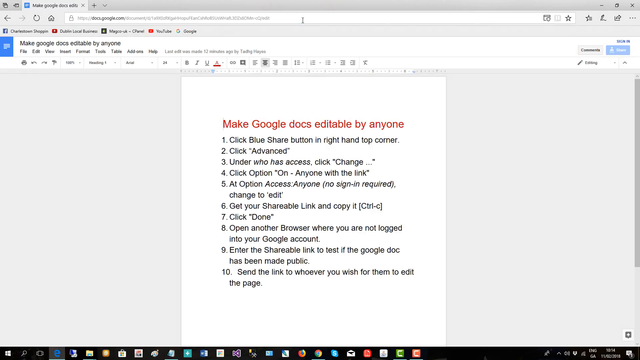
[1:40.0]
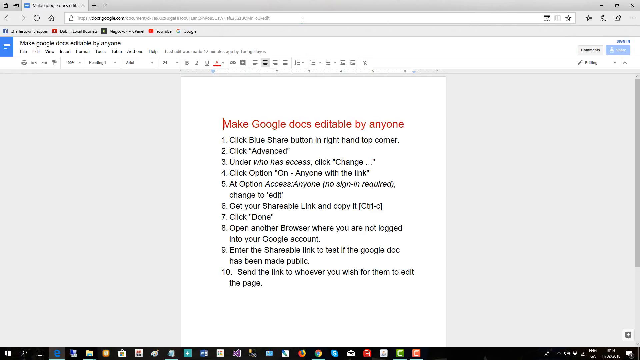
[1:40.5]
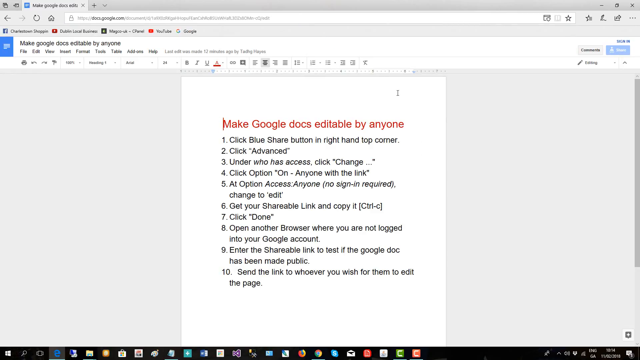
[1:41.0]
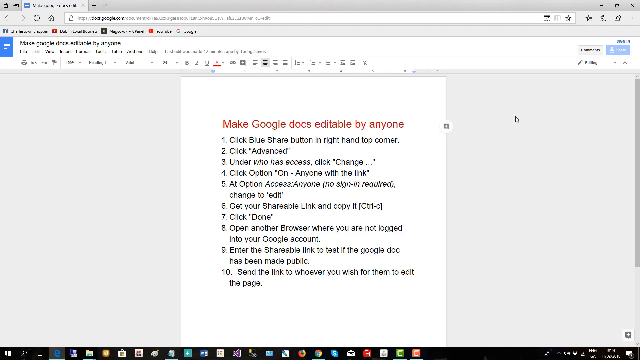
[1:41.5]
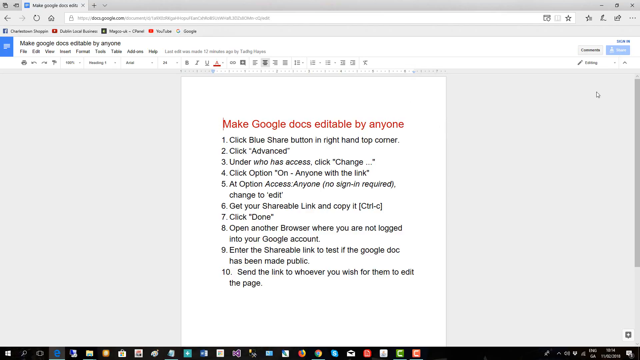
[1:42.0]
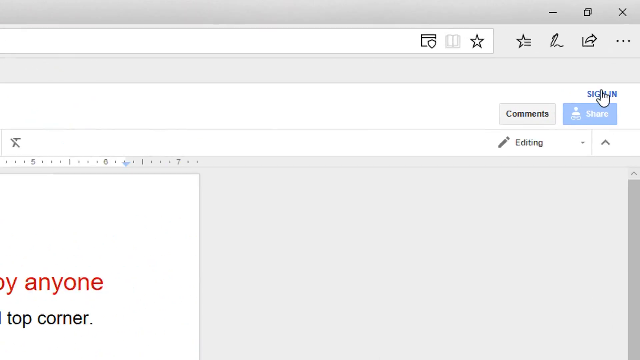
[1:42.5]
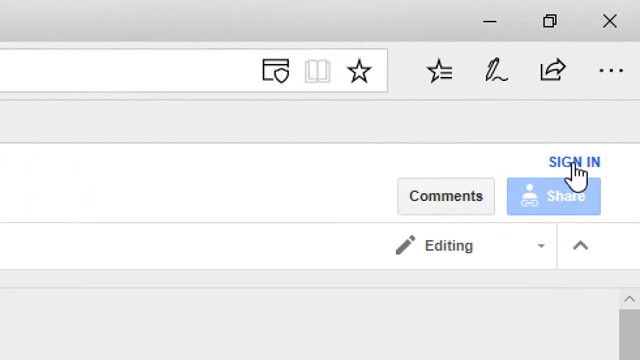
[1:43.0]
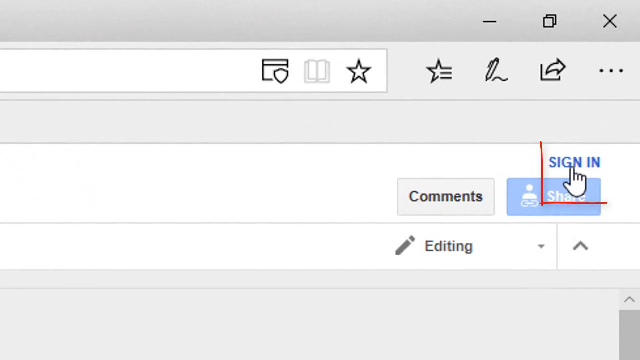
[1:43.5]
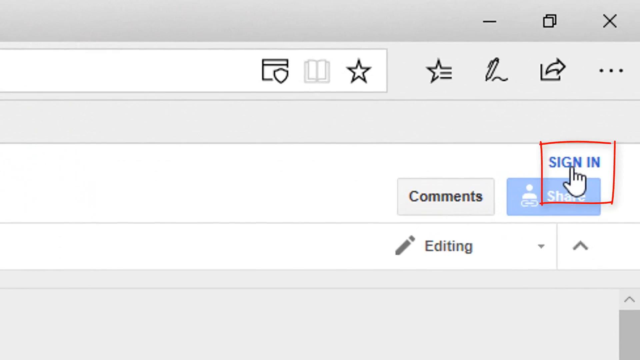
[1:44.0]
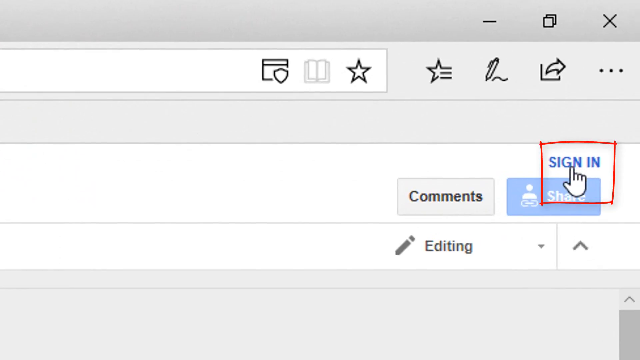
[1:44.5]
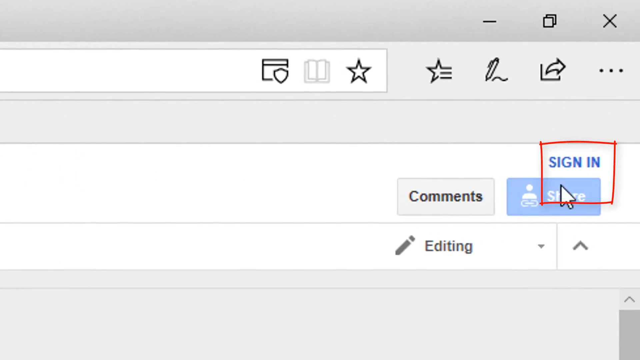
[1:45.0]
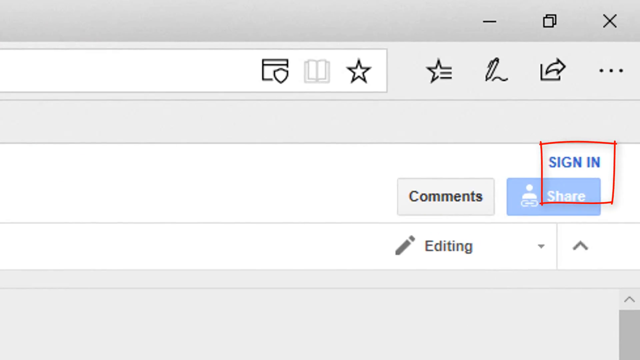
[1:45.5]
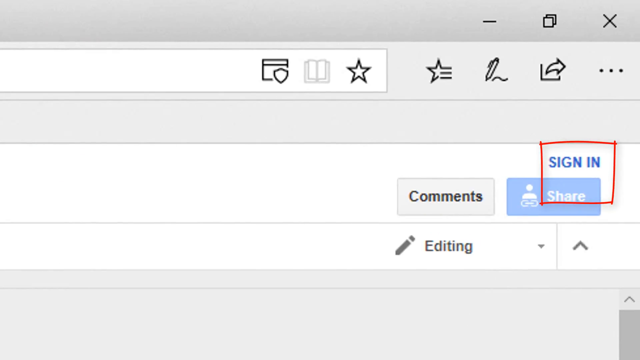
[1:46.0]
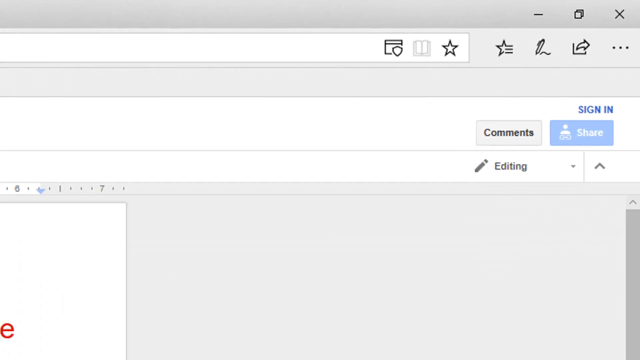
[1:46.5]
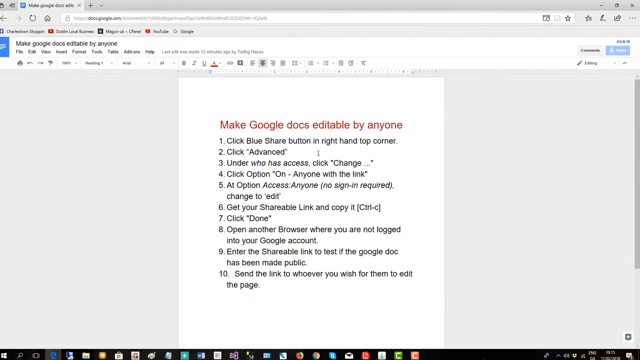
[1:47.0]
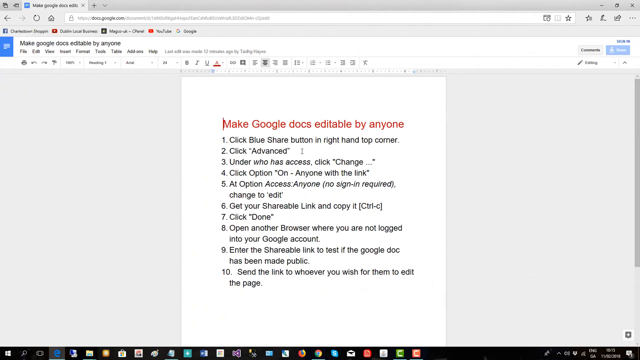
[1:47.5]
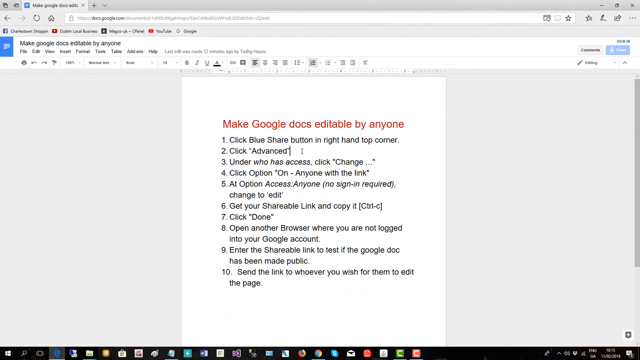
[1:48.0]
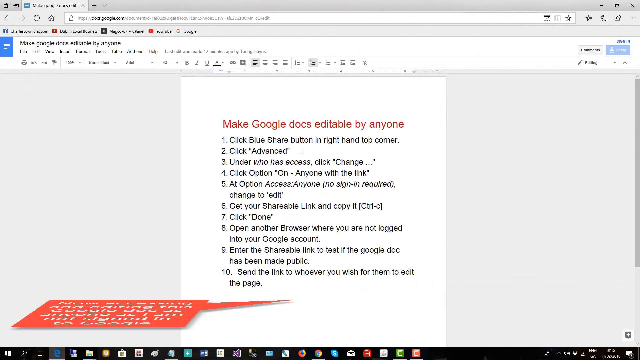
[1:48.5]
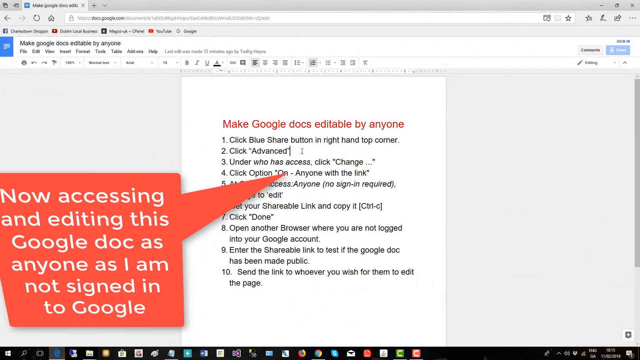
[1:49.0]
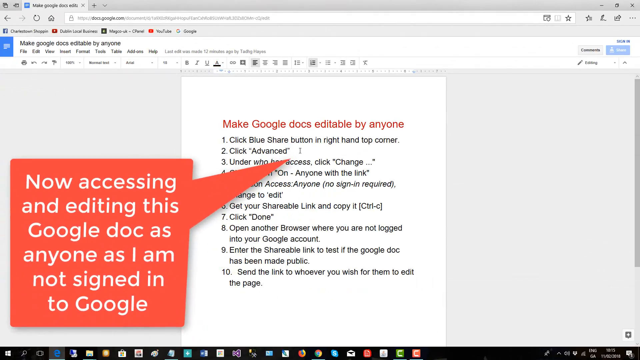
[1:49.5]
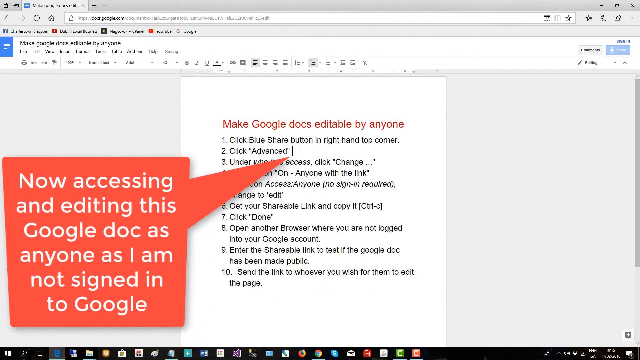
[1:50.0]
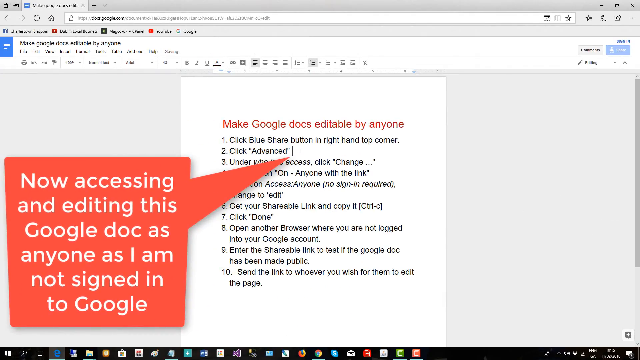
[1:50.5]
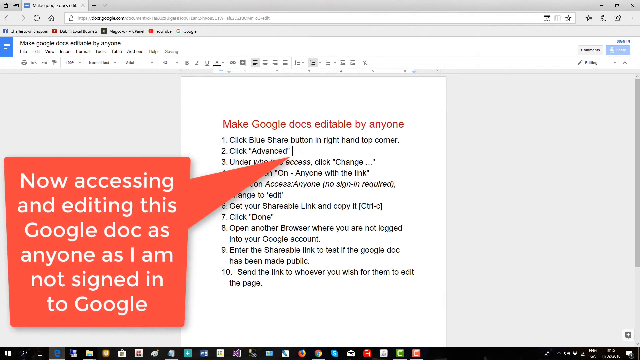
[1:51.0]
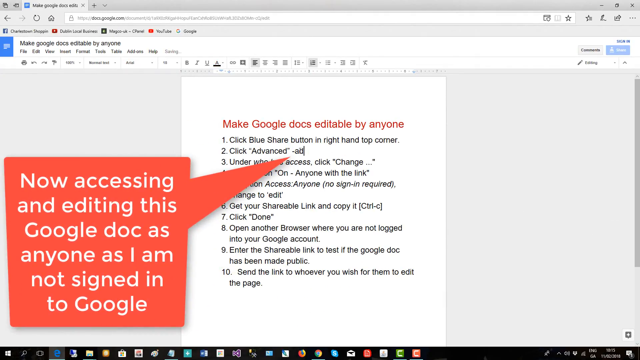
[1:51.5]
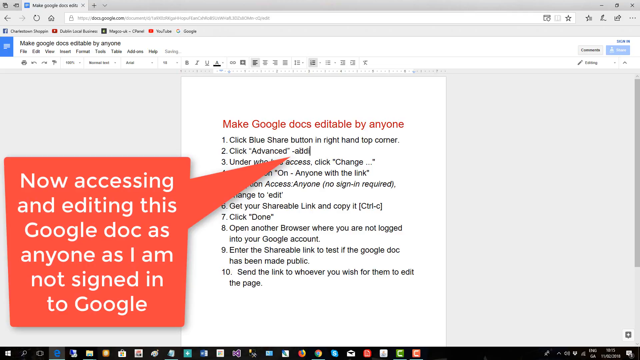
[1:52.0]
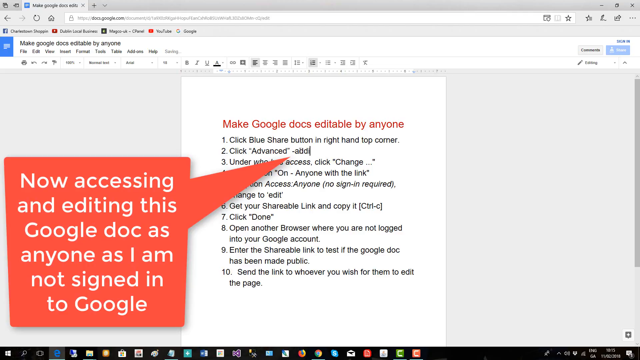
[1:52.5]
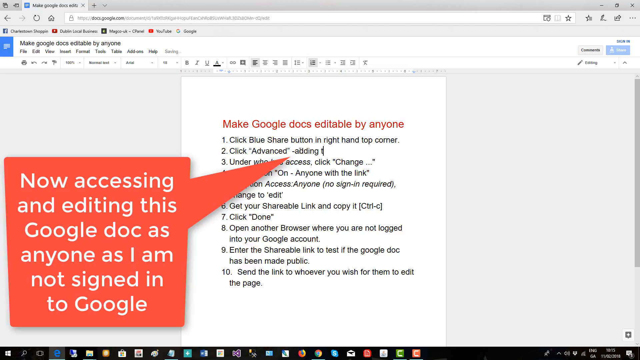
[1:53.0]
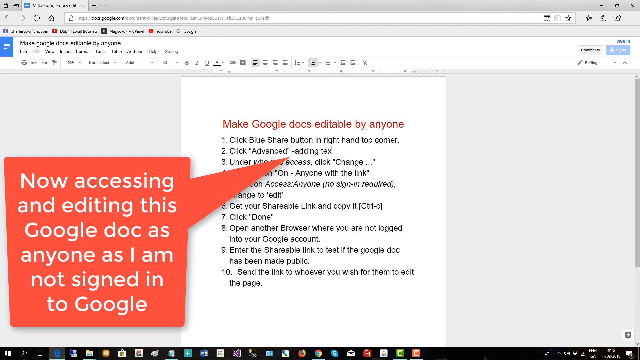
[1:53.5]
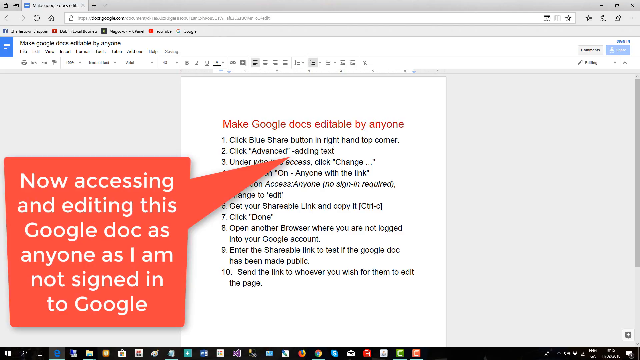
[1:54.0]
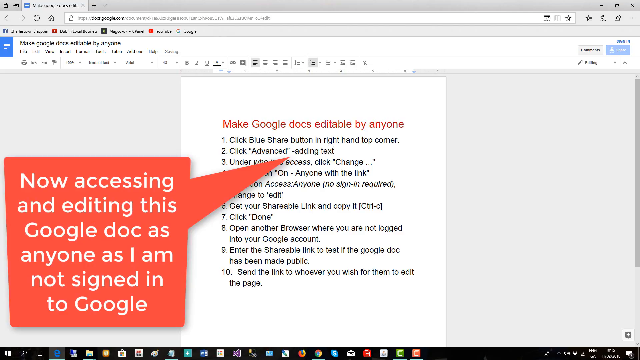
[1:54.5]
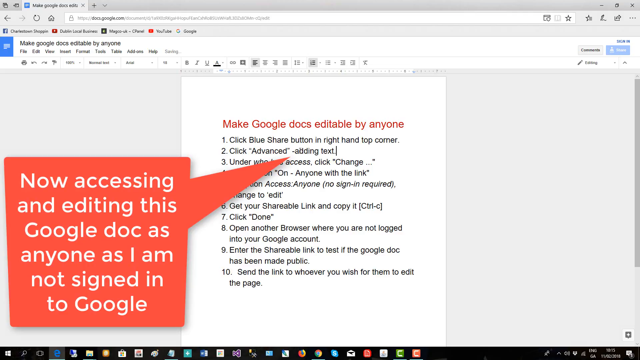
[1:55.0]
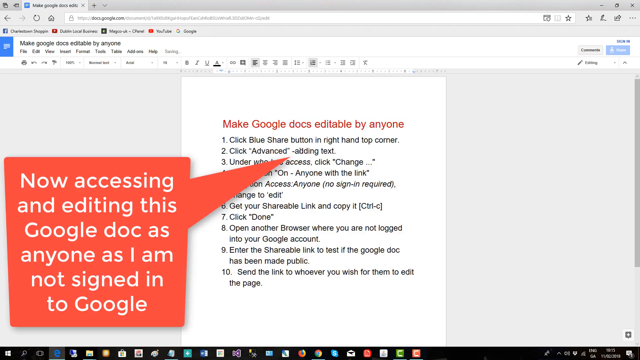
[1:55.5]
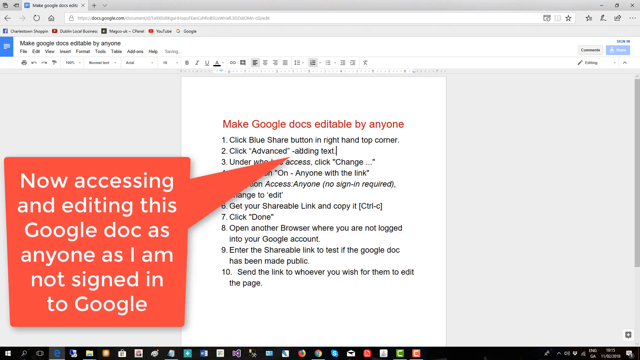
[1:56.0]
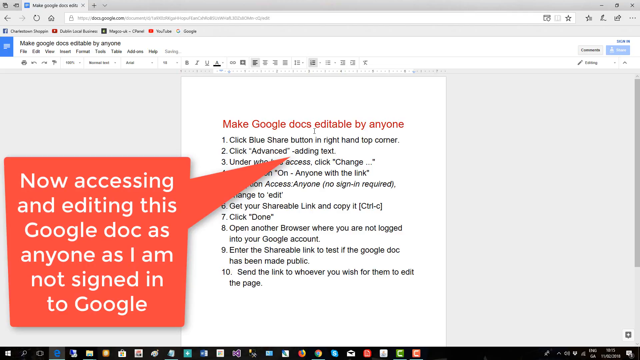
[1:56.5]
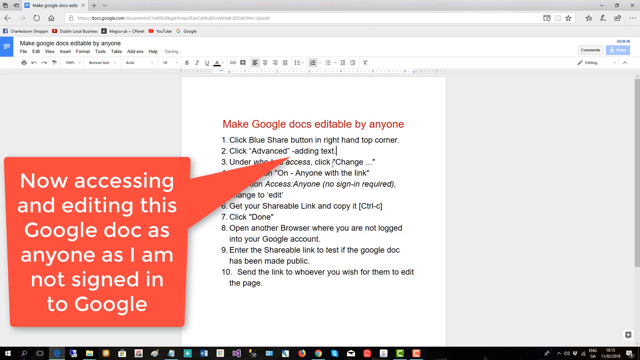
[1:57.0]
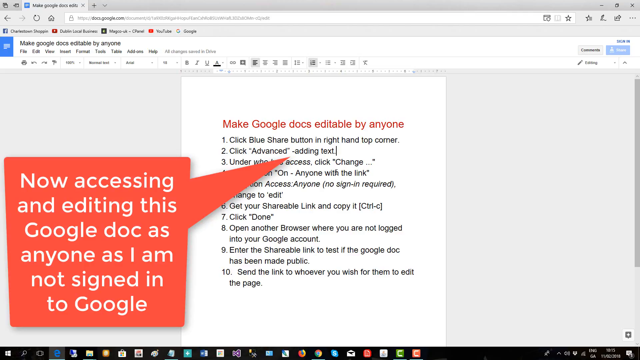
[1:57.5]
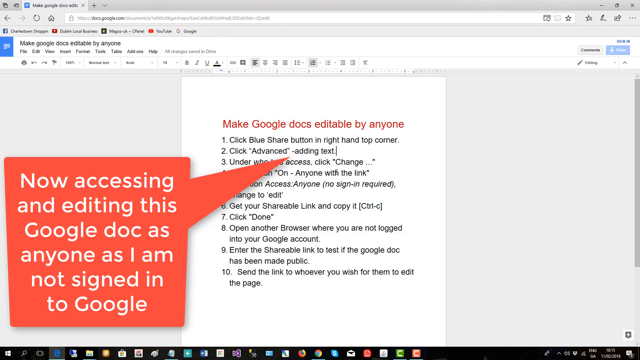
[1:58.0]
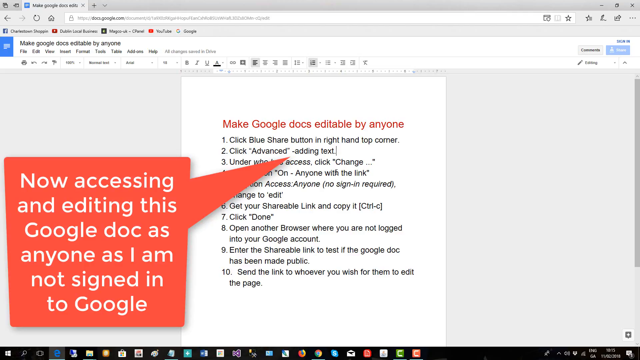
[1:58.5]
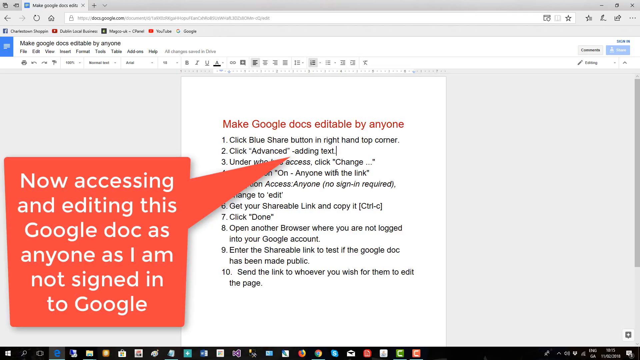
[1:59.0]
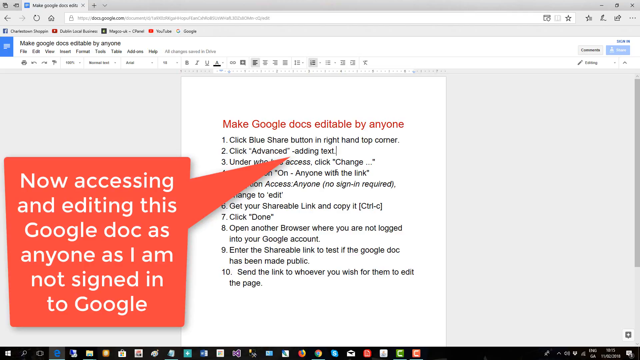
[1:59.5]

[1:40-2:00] The instructions for making Google Documents editable appear on the Google Documents page. All ten instructions are easy to read: the first is click the blue square button, the second is click advanced, the third is click change, the fourth is click on anyone with the link, the fifth is access anyone can edit, the sixth is make it shareable by copying the link, the seventh is you're done, the eighth is open another browser where you want to log in, the ninth is enter the shareable link into Google Docs, and the tenth is send the link to whoever you want. The video then plays, apparently showing that signing in to a Google account is not needed for access.